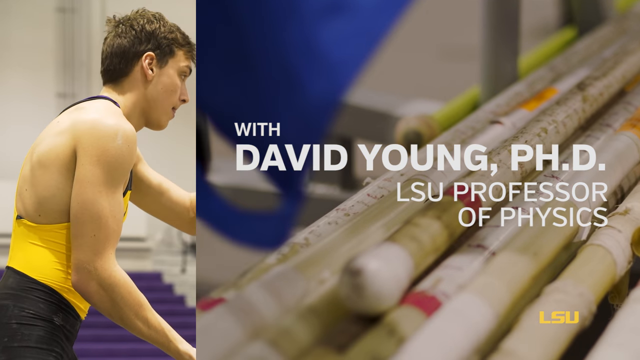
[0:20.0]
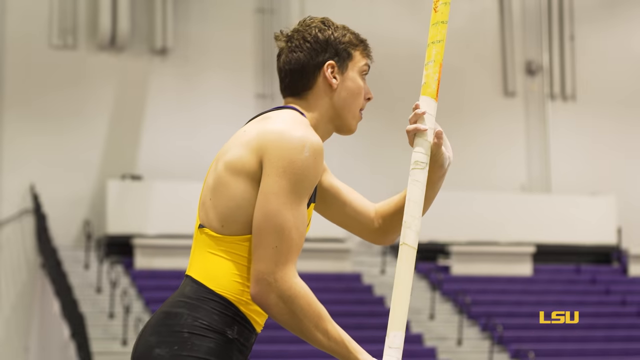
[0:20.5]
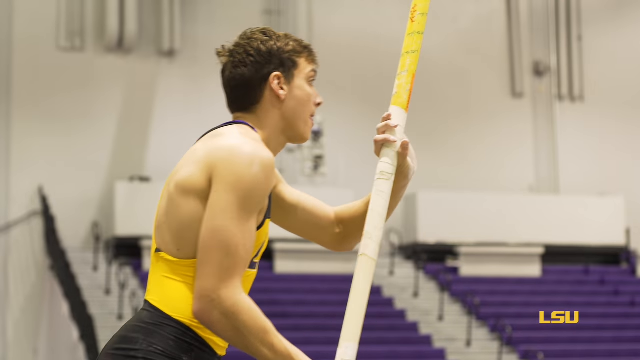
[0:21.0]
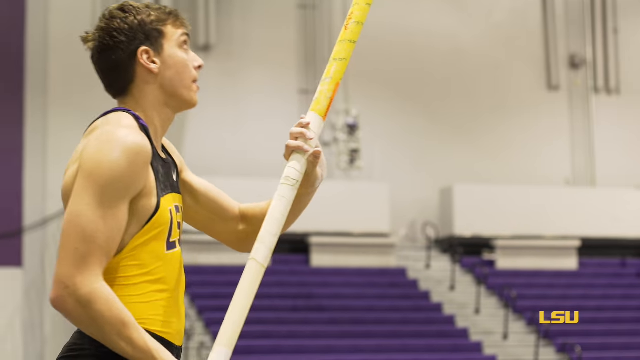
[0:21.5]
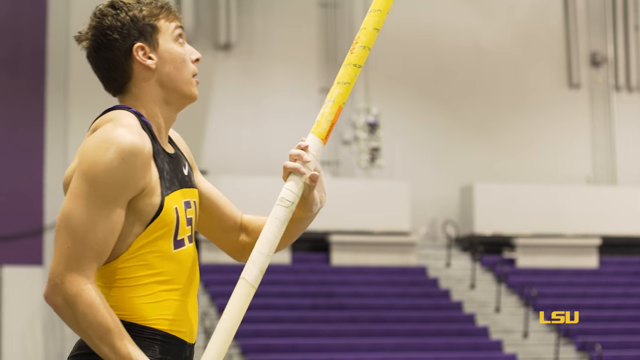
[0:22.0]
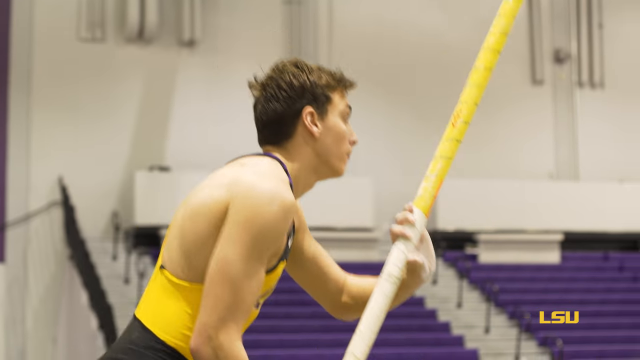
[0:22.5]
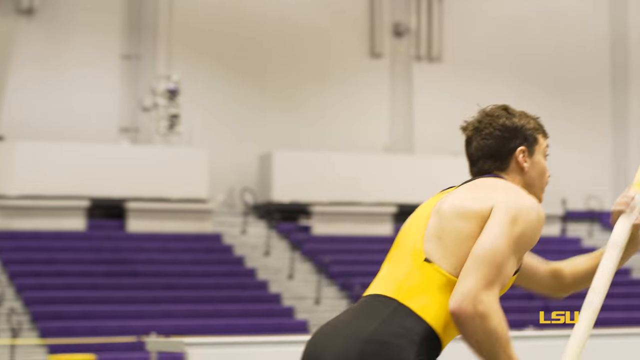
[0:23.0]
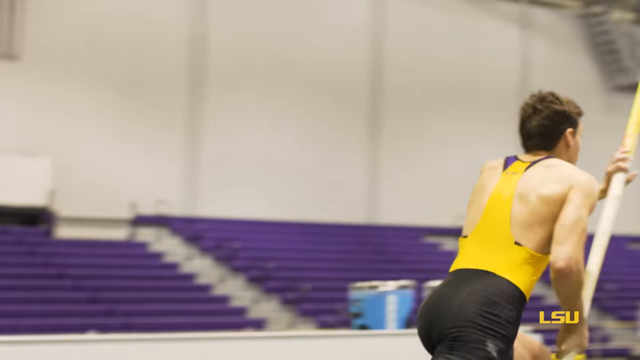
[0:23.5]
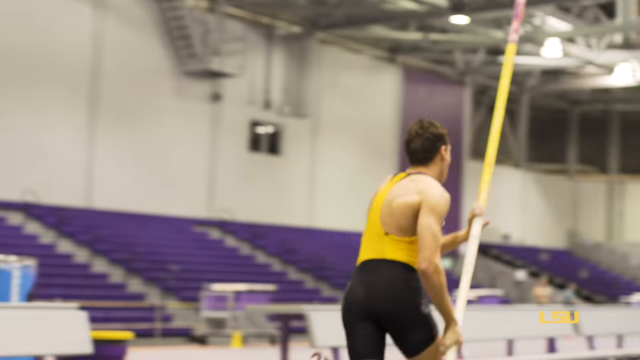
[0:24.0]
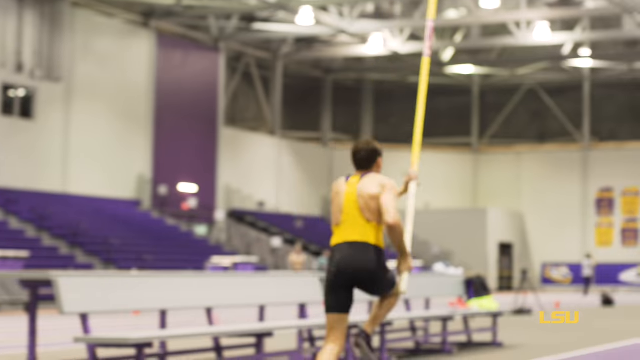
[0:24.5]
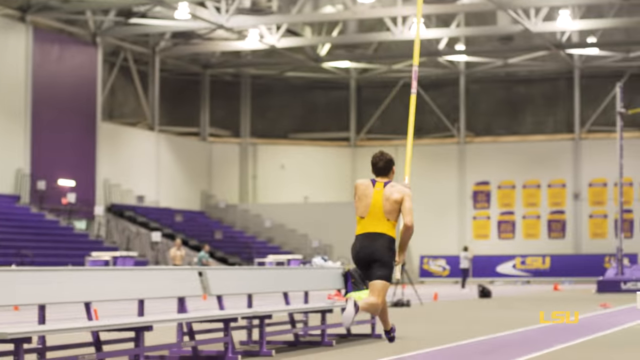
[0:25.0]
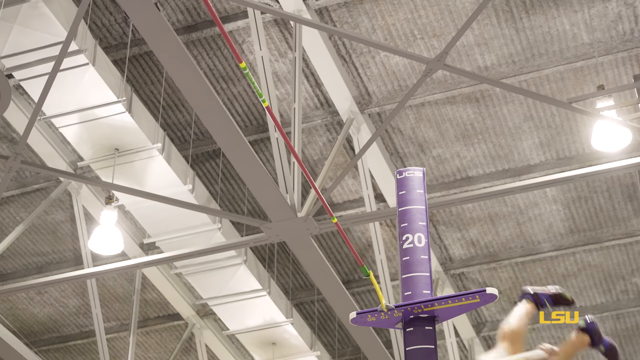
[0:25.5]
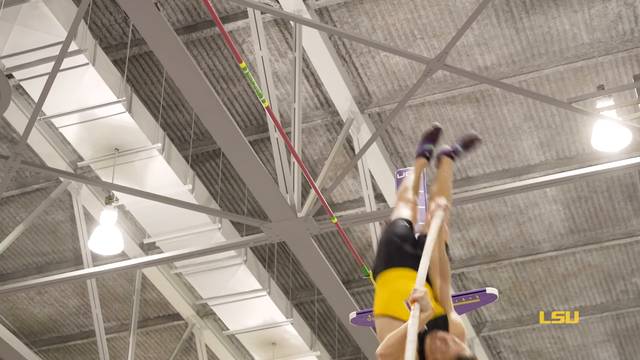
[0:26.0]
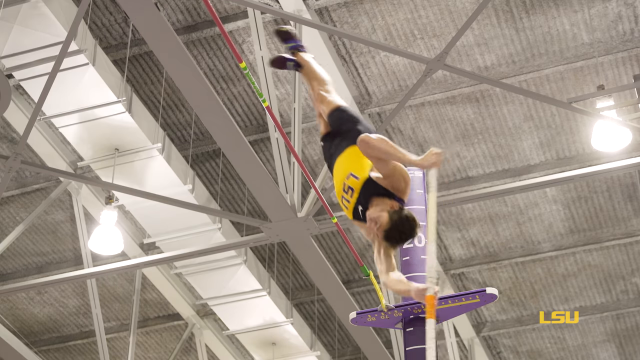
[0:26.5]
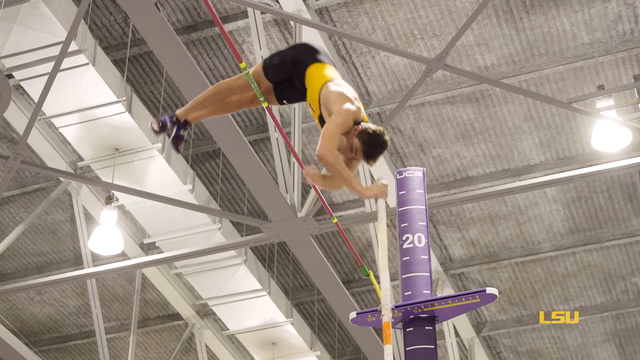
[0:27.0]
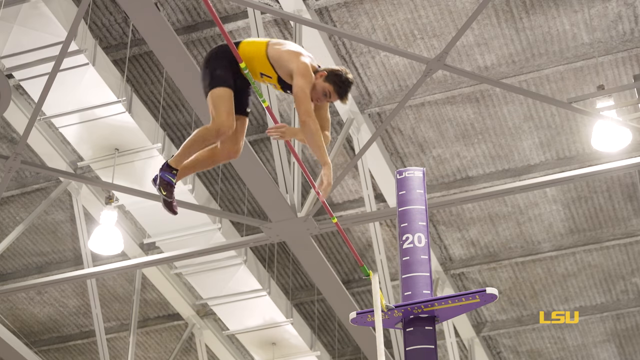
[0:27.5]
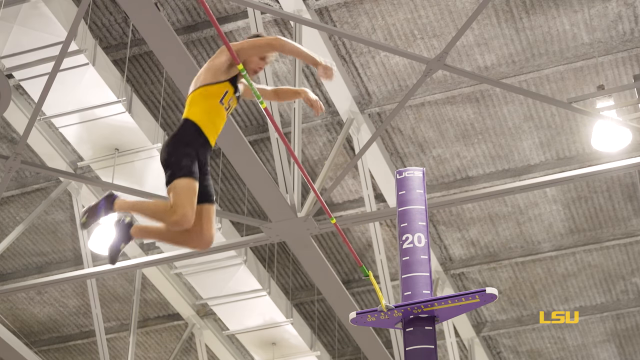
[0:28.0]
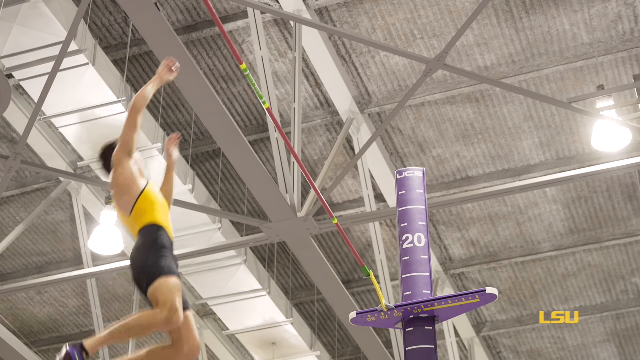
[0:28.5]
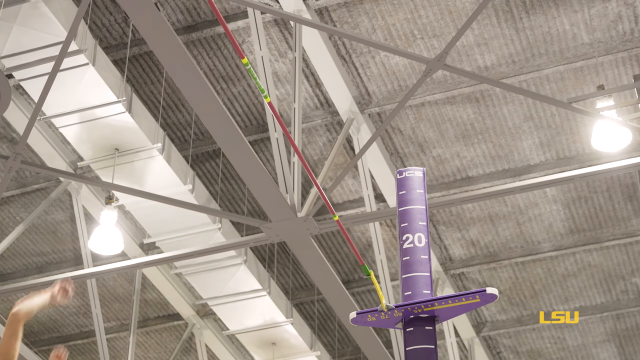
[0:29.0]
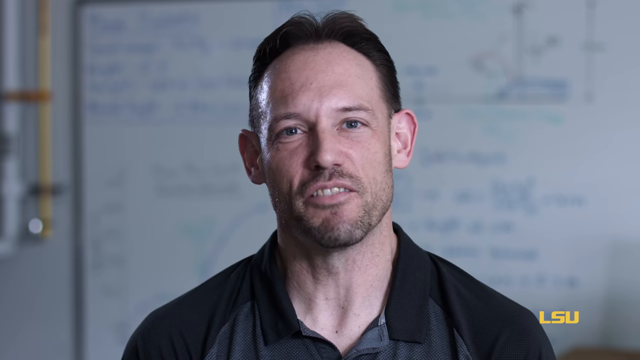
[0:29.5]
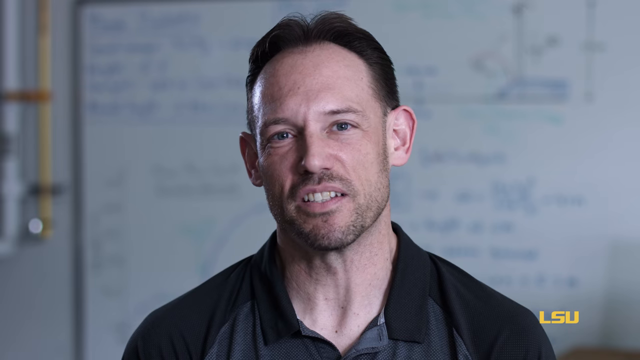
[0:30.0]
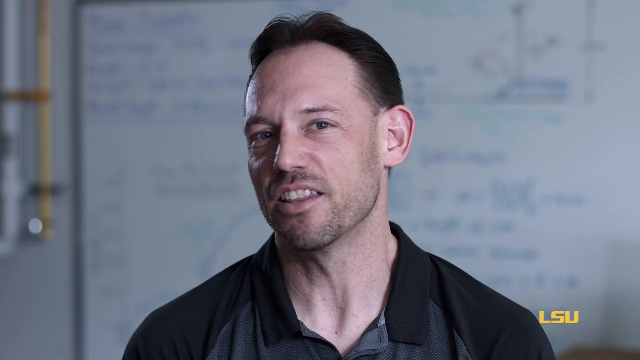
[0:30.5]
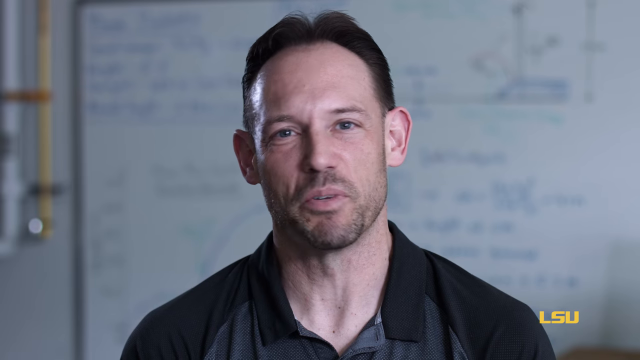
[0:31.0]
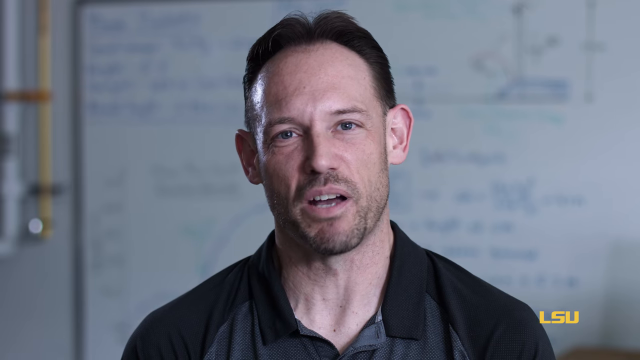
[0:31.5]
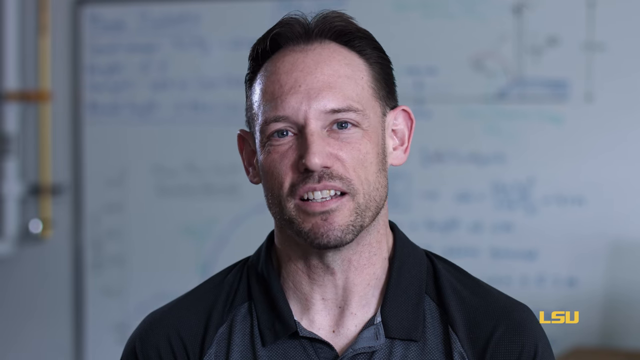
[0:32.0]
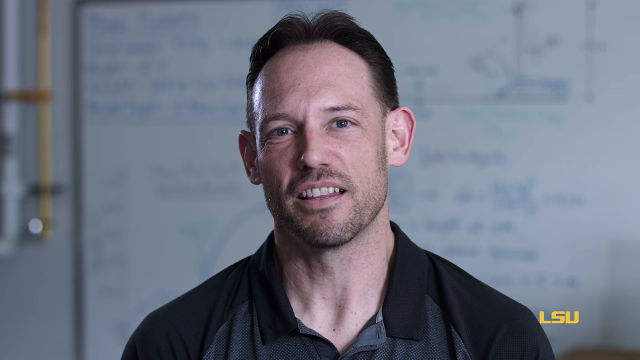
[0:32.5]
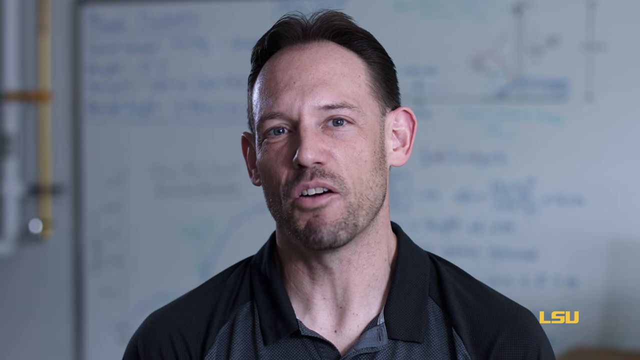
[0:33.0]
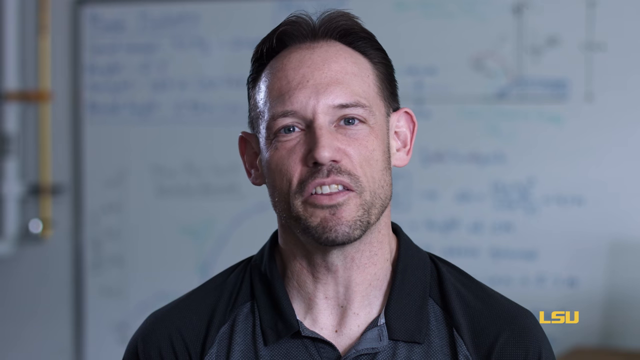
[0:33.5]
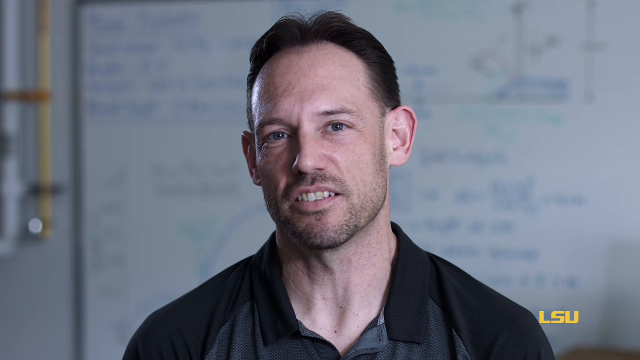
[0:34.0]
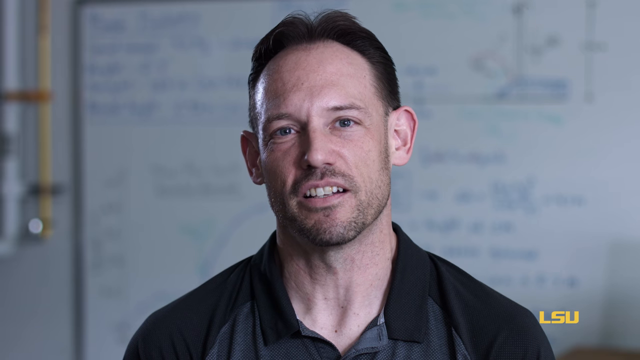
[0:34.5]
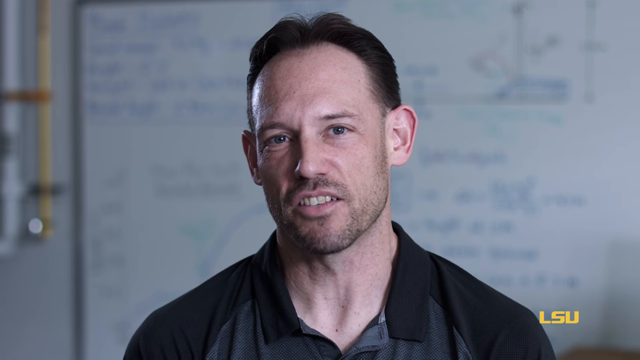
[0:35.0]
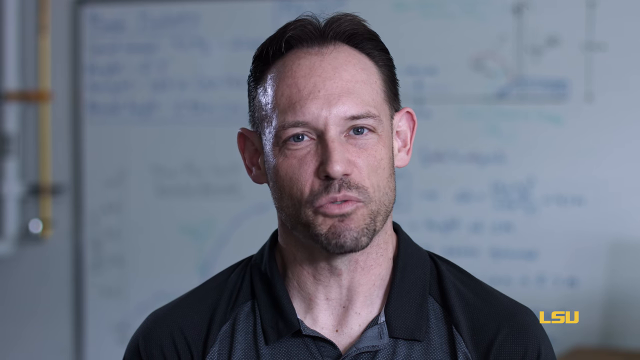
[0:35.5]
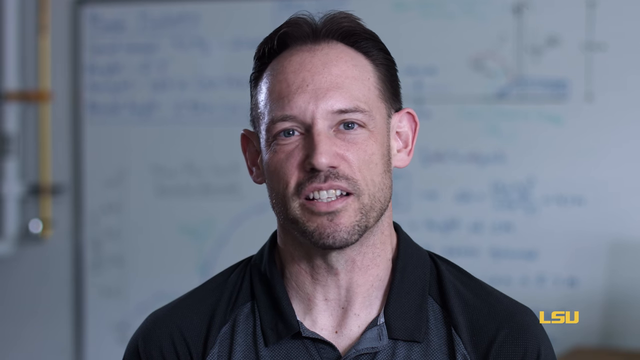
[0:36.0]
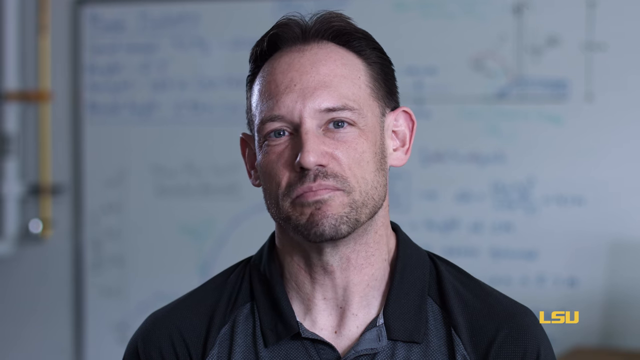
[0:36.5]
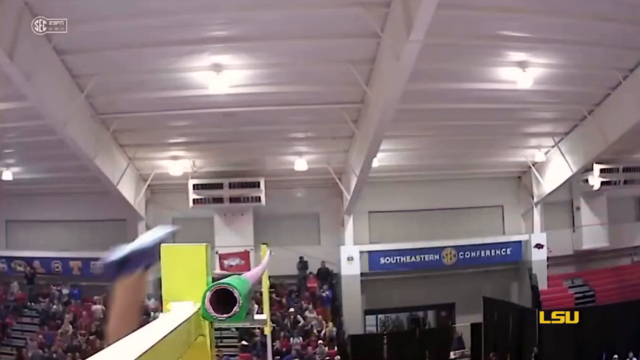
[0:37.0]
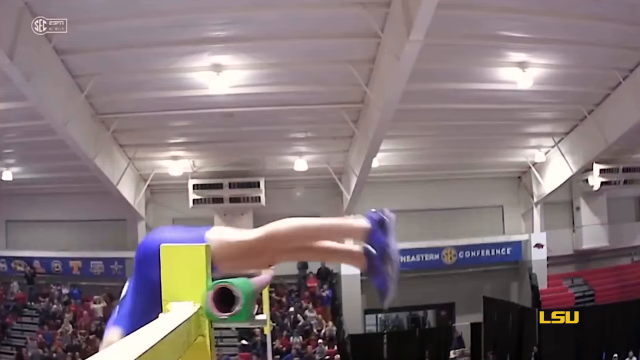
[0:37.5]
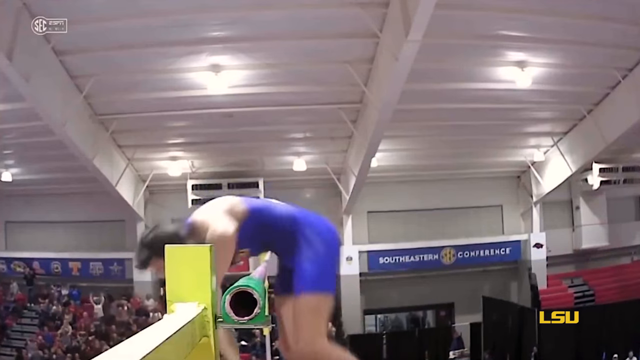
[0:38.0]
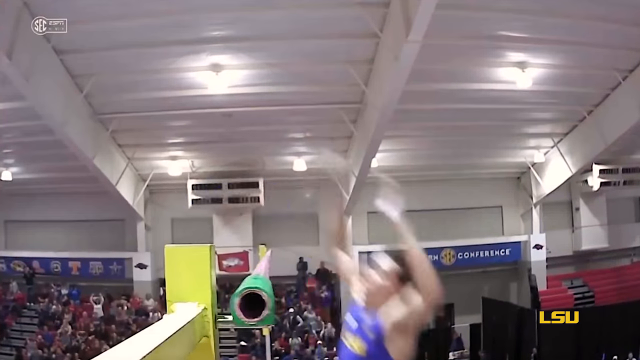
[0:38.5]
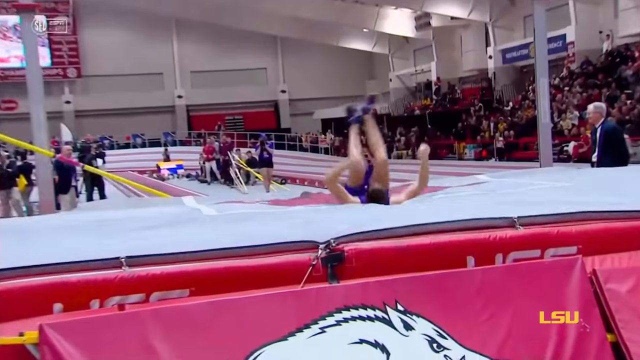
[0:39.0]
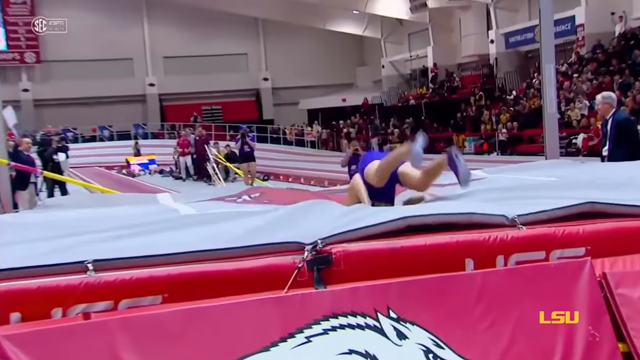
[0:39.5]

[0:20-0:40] The LSU student holds the pole and looks at the line as he runs toward the vault. He jumps over a height of apparently about 16 feet. The professor appears next: he has a beard and wears a black top, and behind him is a whiteboard with a lot of text, probably about pole vaulting. He talks for a couple of seconds before the video transitions back to the student athlete. The athlete touches the pole as he goes over it, with both his feet and his chest, but the pole does not fall and stays horizontal, and he is still very happy.